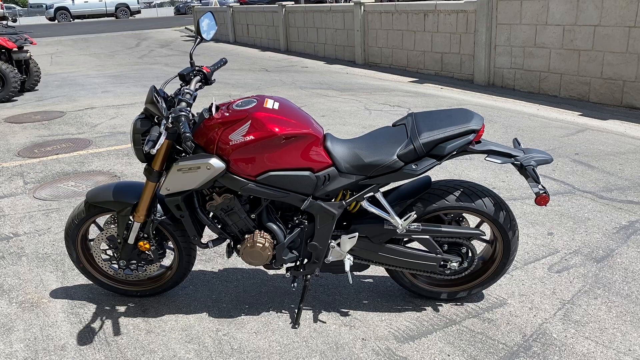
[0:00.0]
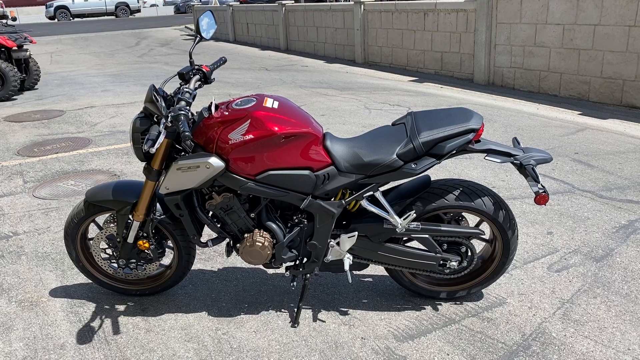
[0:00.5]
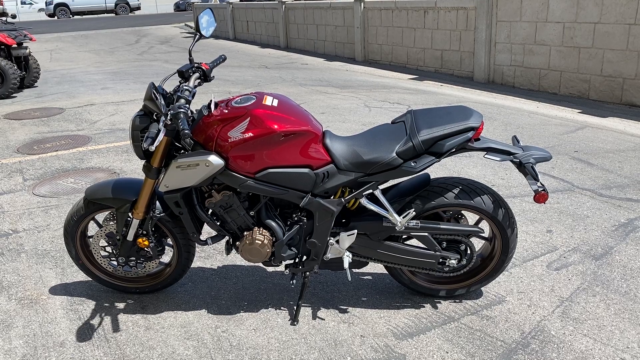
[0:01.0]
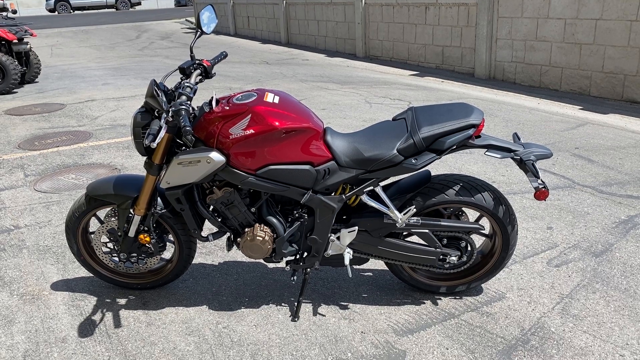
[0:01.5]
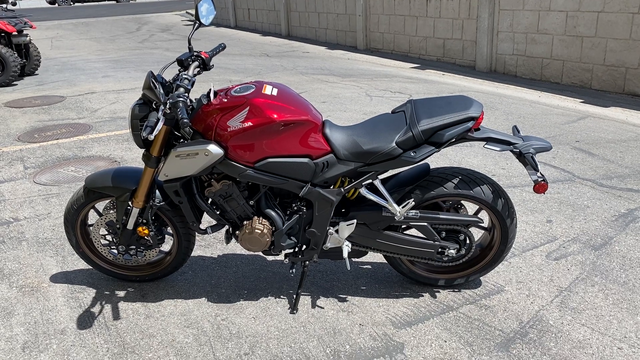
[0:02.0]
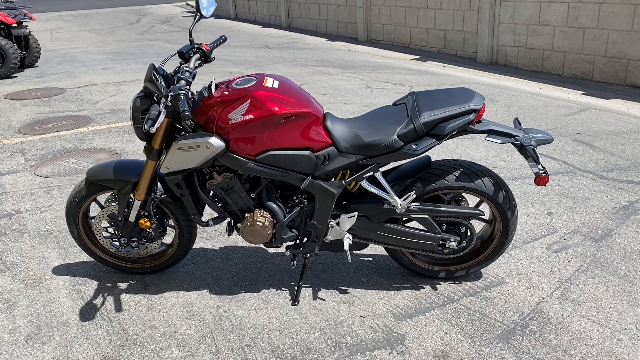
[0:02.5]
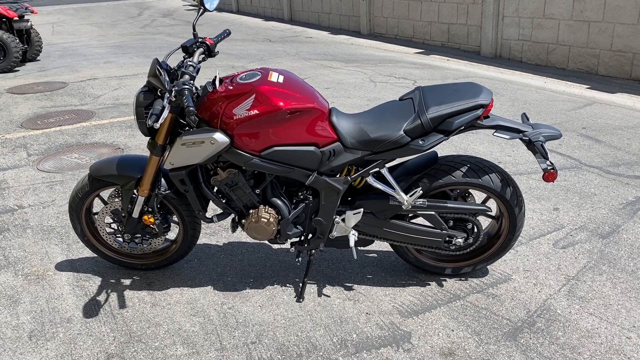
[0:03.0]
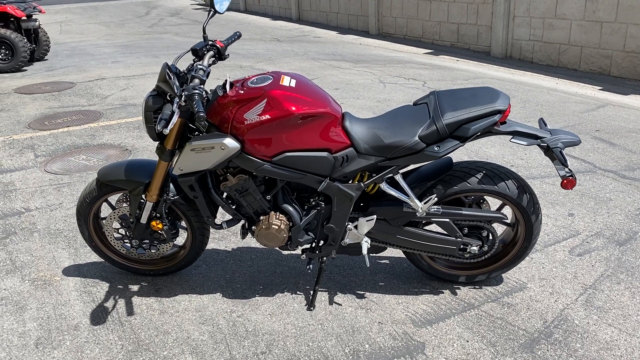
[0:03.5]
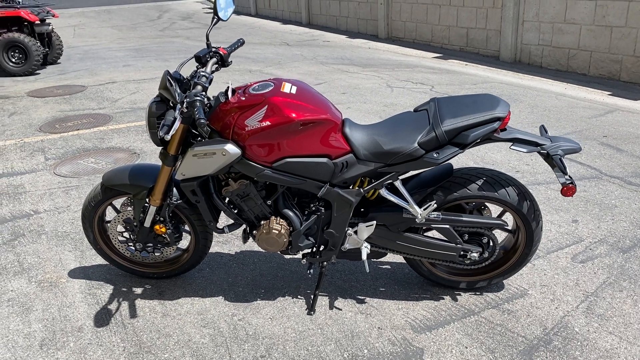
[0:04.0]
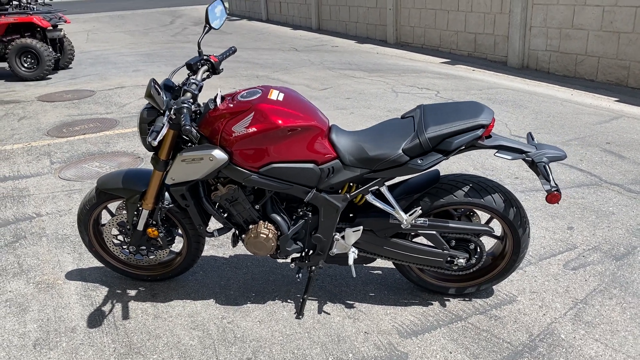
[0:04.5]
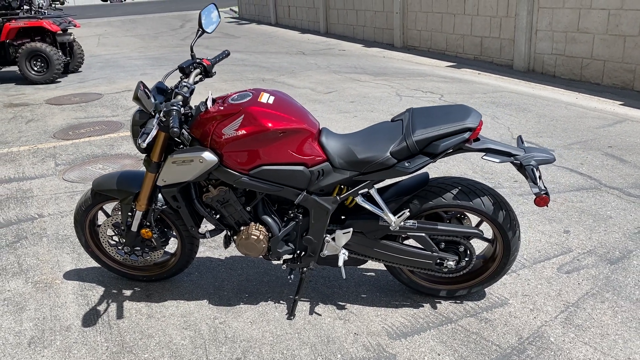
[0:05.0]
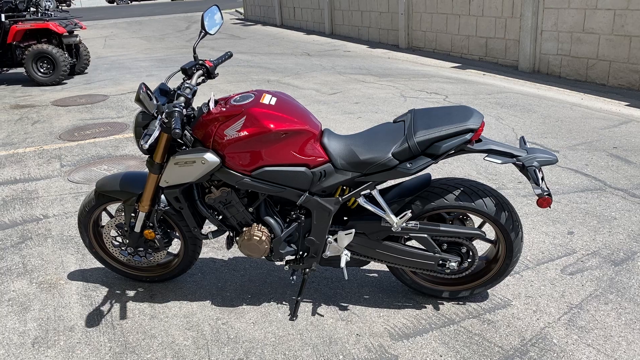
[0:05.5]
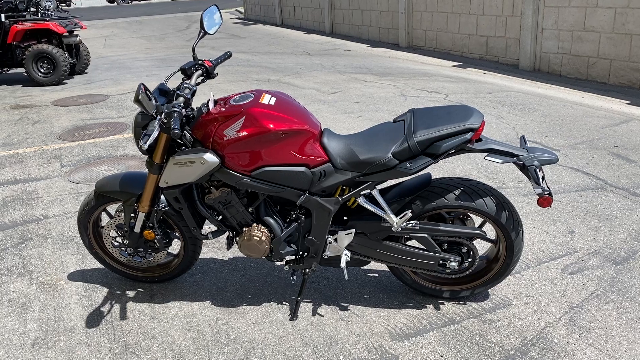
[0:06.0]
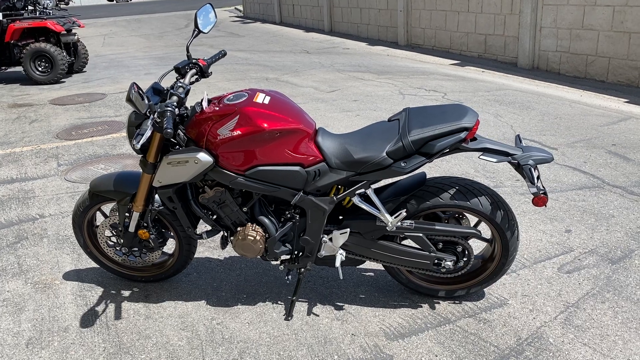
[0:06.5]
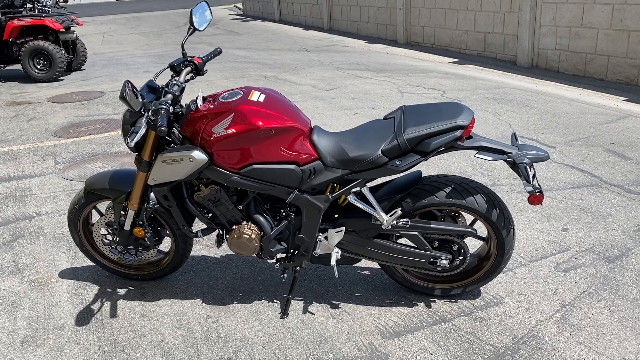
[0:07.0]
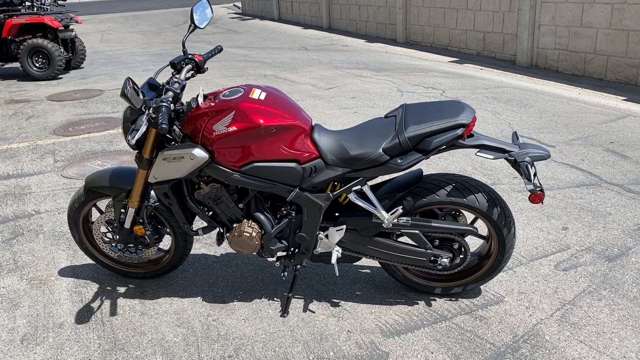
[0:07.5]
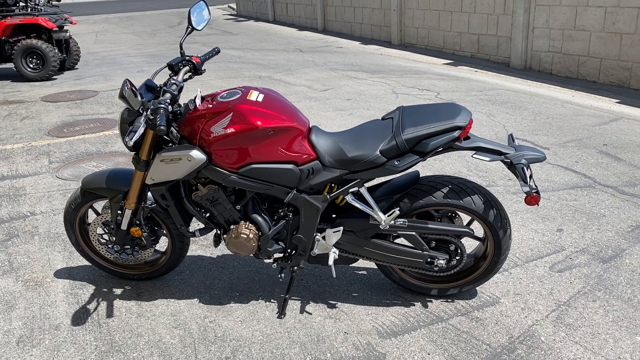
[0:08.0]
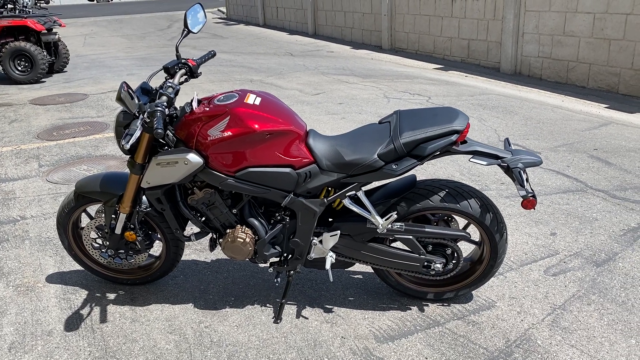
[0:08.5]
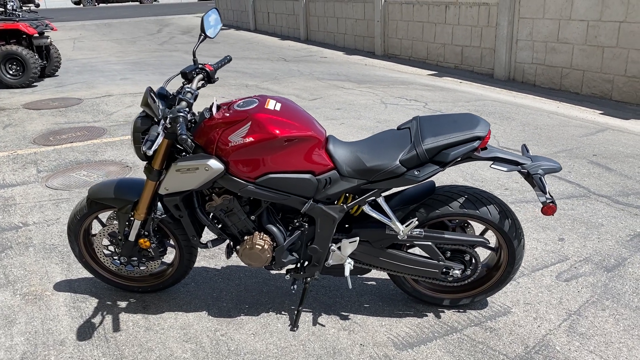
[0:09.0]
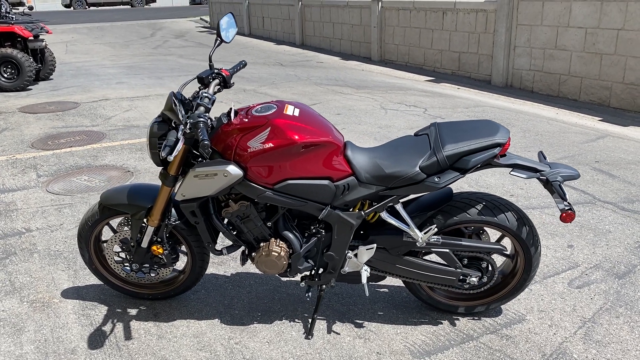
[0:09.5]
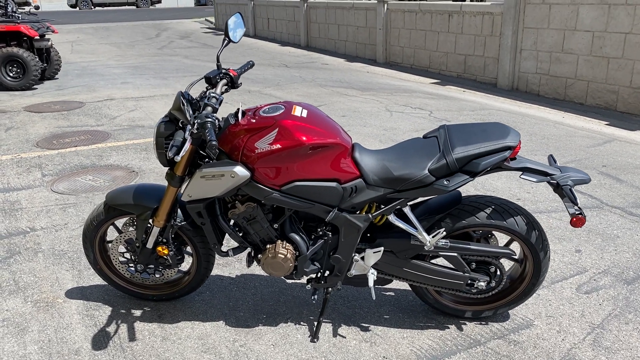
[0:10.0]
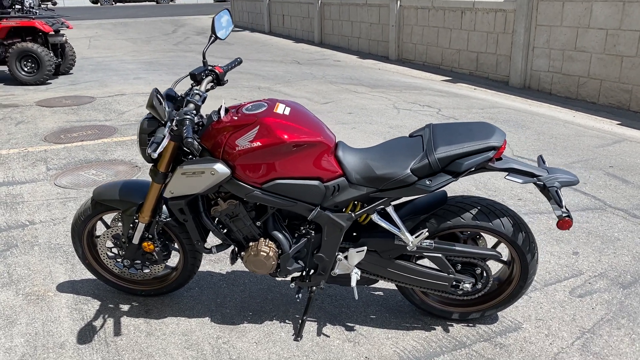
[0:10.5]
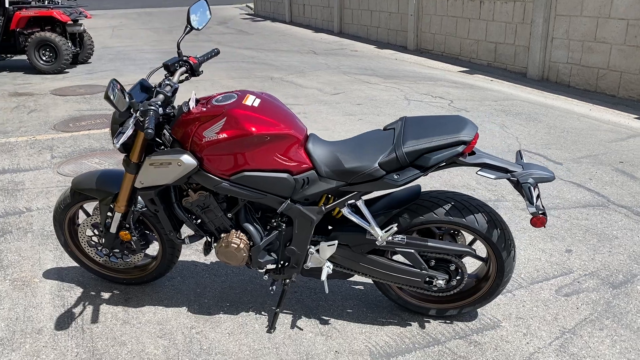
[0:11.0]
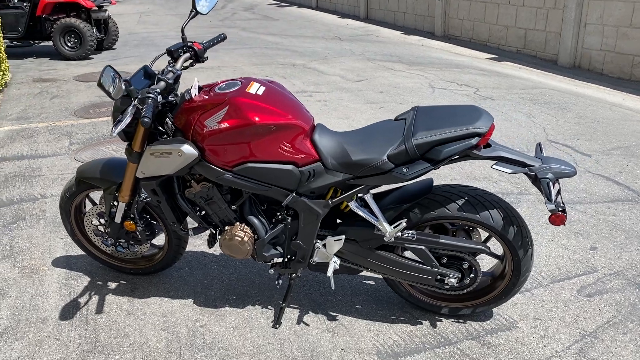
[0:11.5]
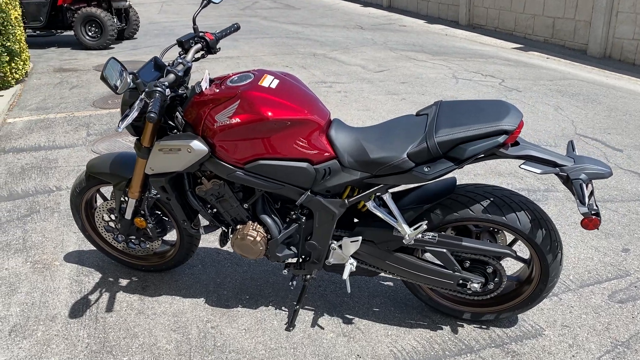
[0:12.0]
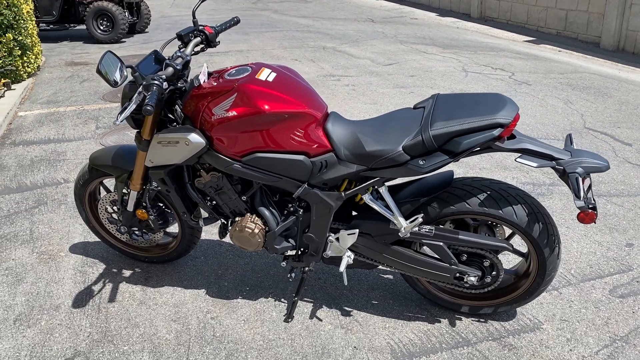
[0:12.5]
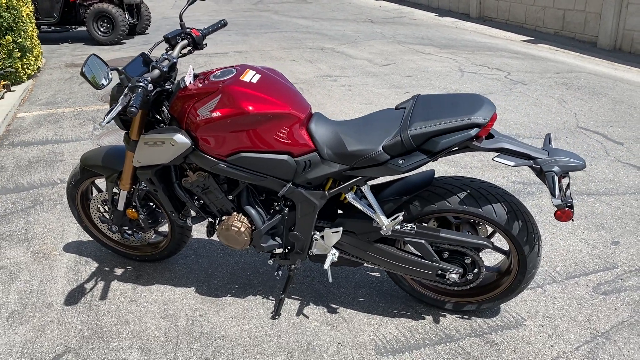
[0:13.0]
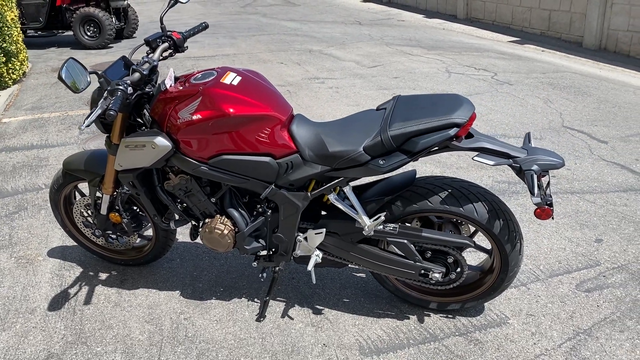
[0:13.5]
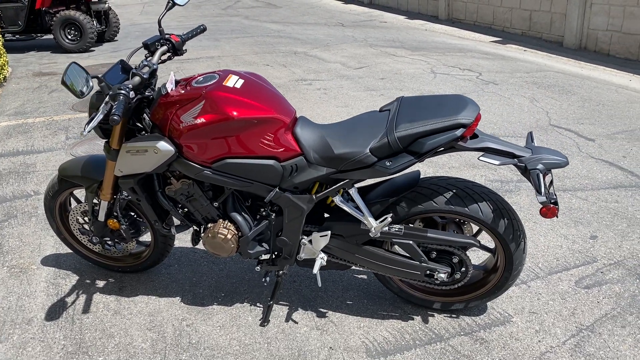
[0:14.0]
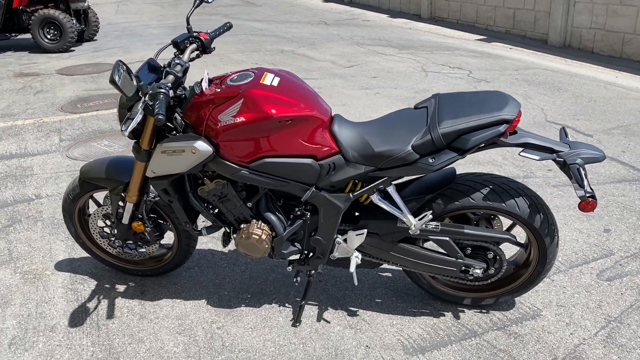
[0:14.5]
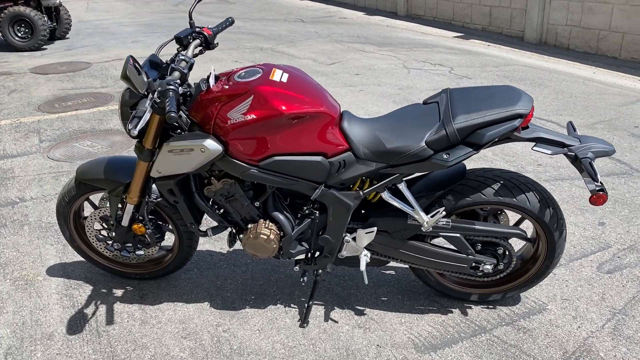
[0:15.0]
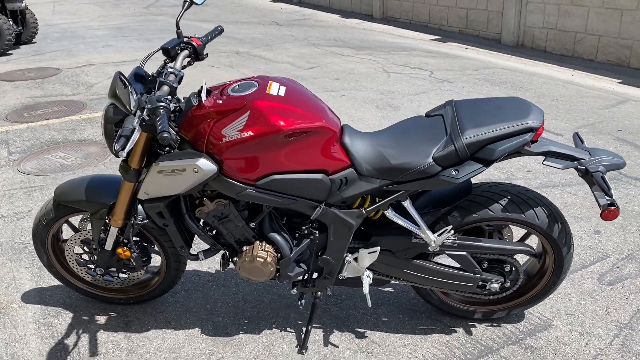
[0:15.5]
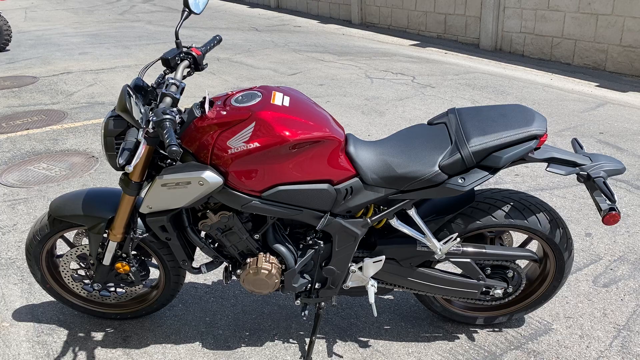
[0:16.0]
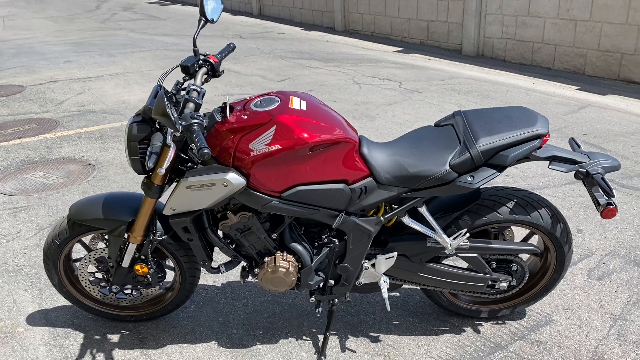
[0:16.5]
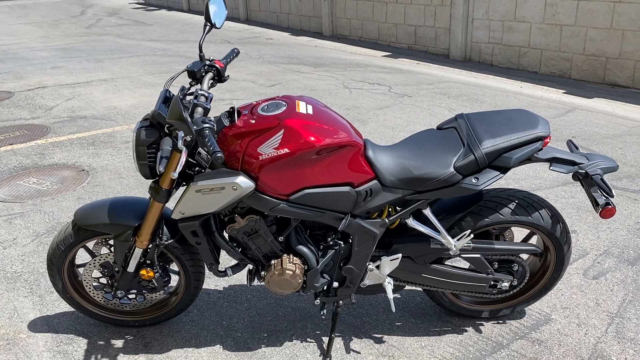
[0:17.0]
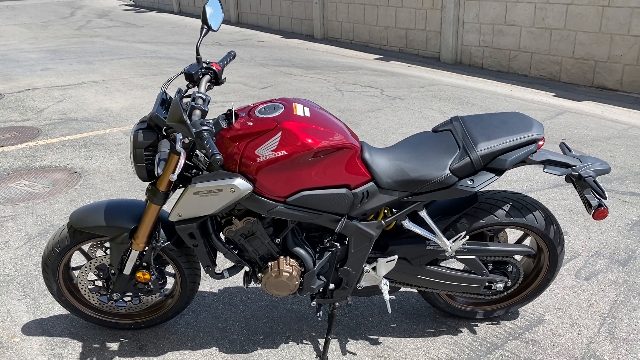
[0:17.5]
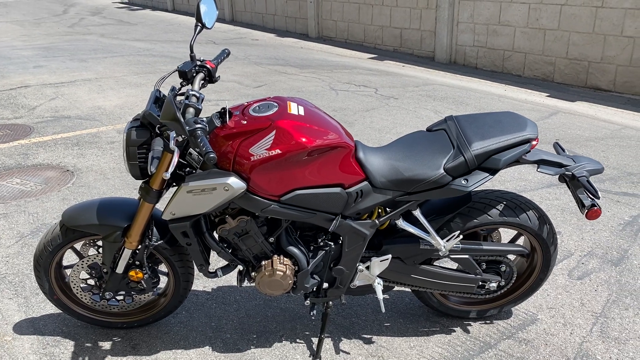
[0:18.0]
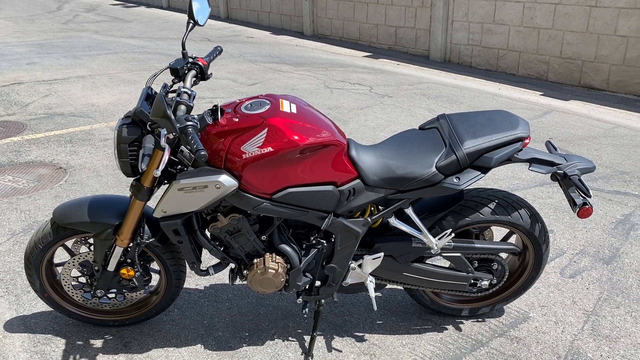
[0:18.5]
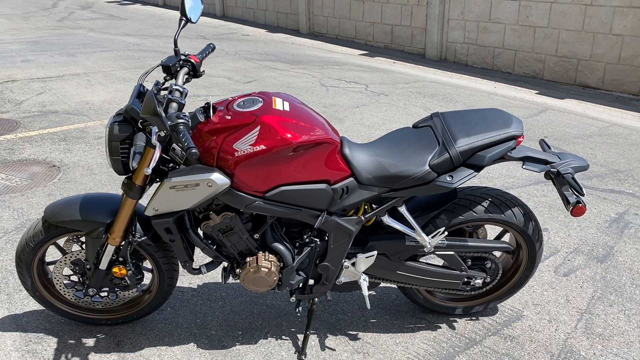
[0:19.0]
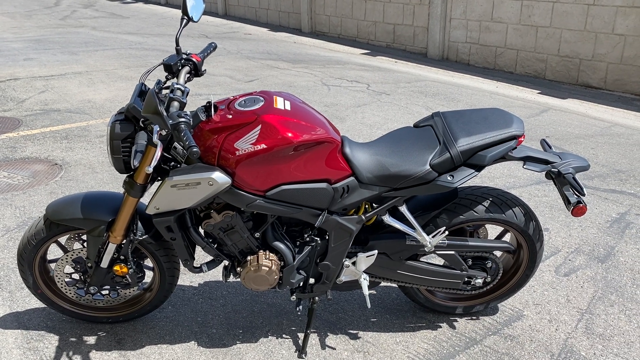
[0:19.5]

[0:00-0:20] A motorcycle is outside. It has a wing emblem. On the back there is a fender that is somewhat long and extends over the wheel, and the seat looks like two people could sit on it. Both fenders are black, and most of the motorcycle is black, but it has a silver part, a red motor and the two wings. There is a gold part at the bottom near the kickstand, and the brakes are somewhat silvery. A part going onto the front wheel that gives it cushion is gold and silver. Behind it is a wall made of cinder blocks with column-like middle portions that stabilize it.